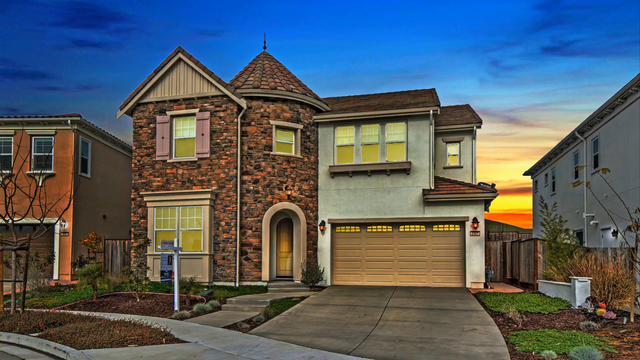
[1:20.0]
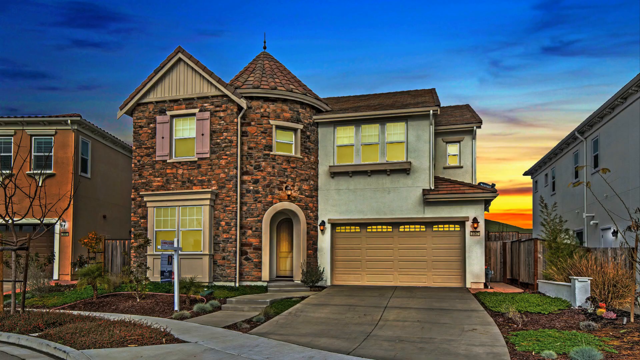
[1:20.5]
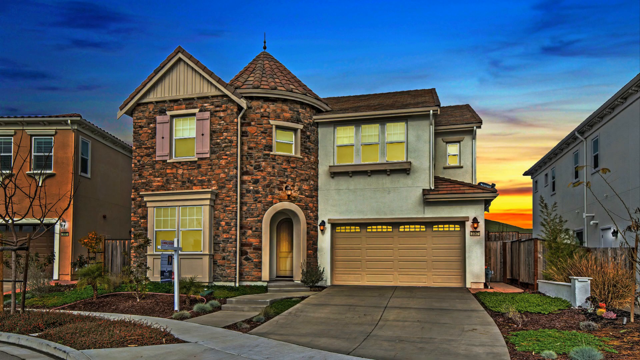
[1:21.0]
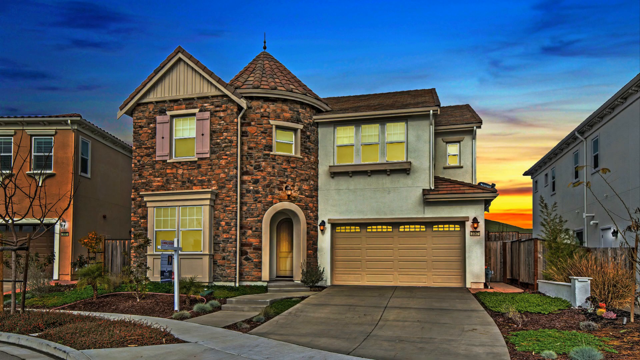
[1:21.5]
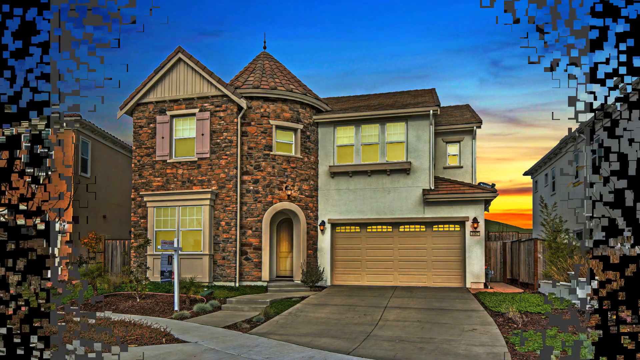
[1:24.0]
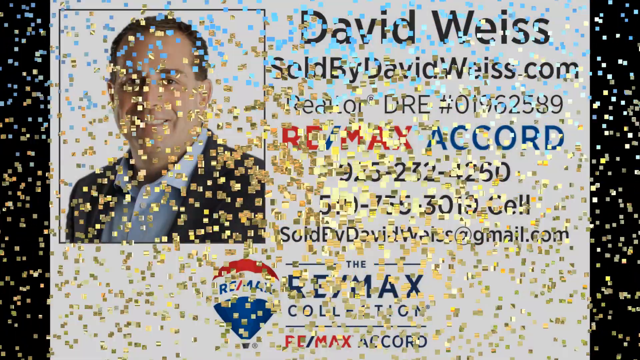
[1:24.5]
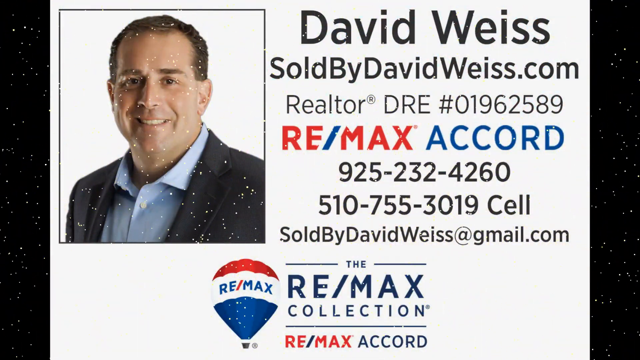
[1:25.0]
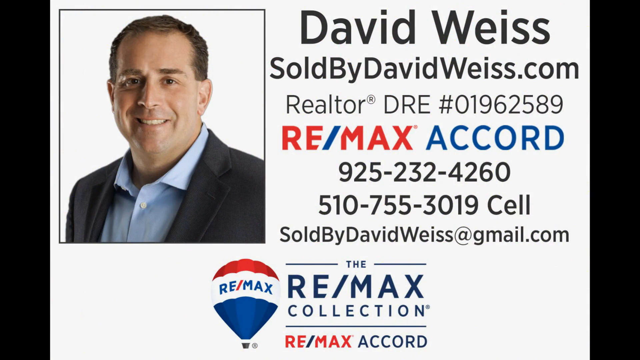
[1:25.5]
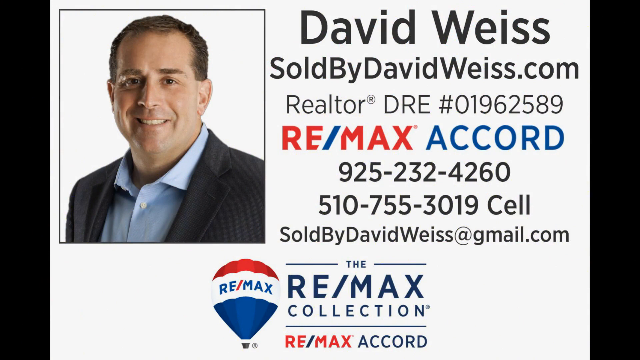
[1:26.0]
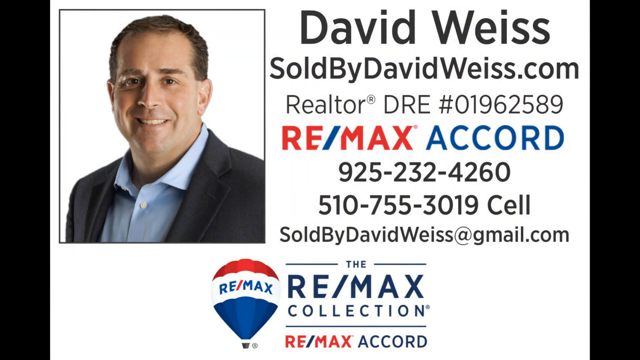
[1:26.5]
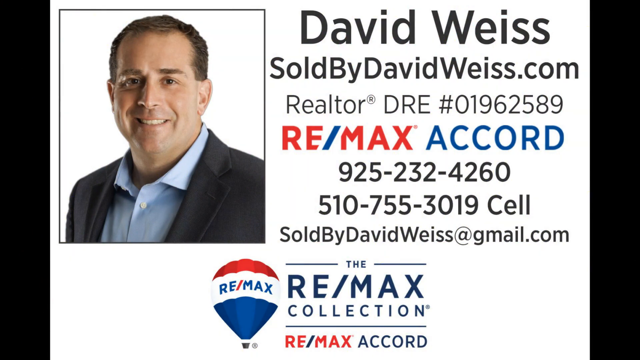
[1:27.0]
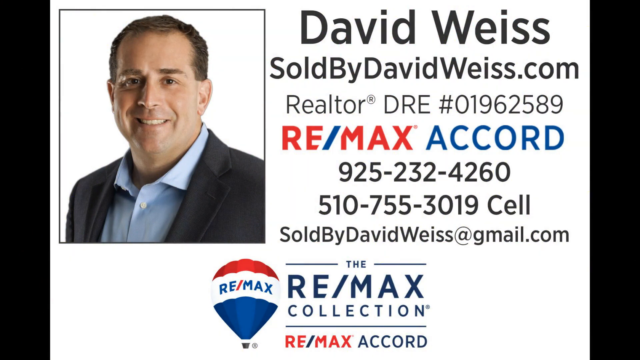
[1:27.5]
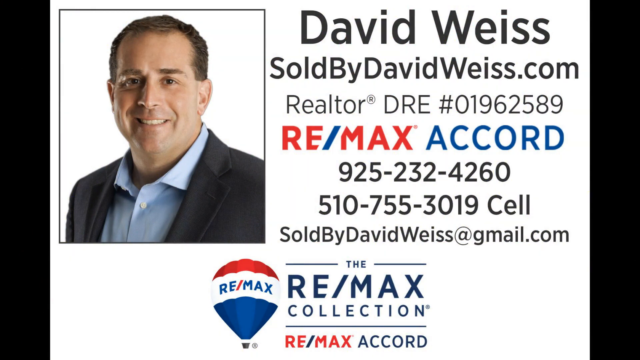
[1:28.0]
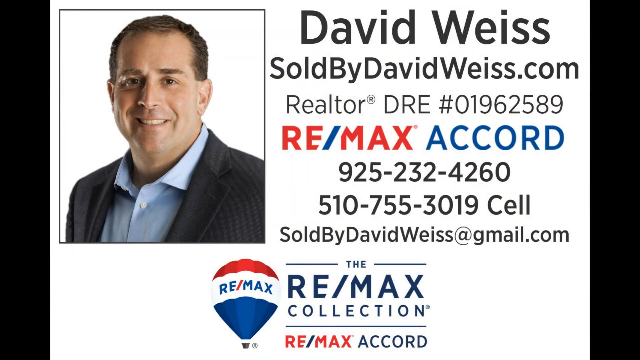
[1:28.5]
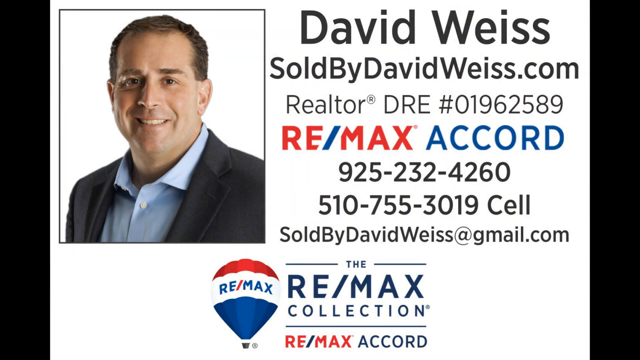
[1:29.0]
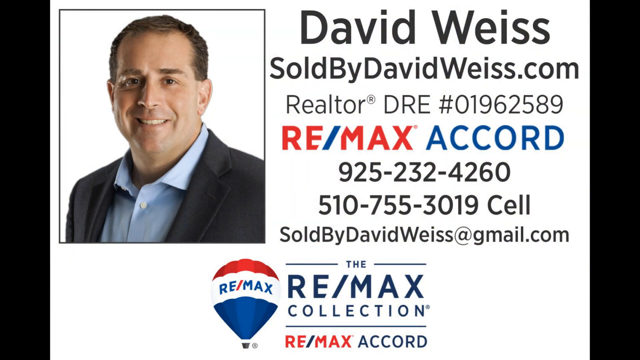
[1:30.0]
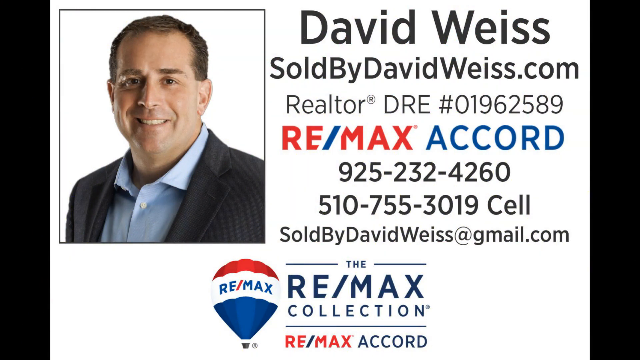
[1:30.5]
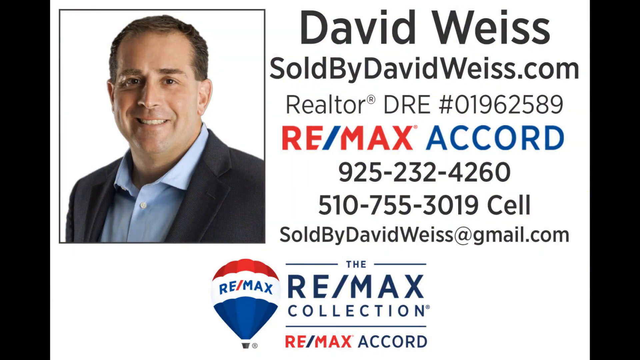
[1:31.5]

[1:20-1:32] The video shows David Wears, sold by davidwears.com, and the company Remarks collection. The building and its location are shown.